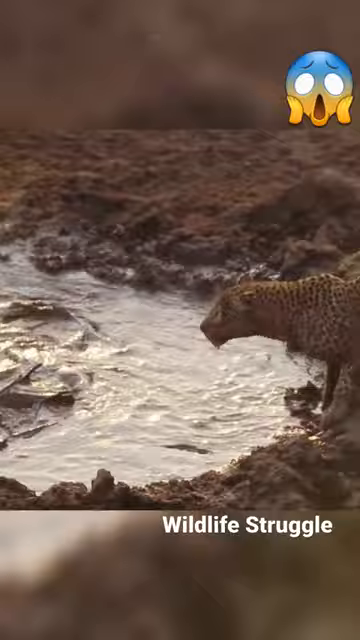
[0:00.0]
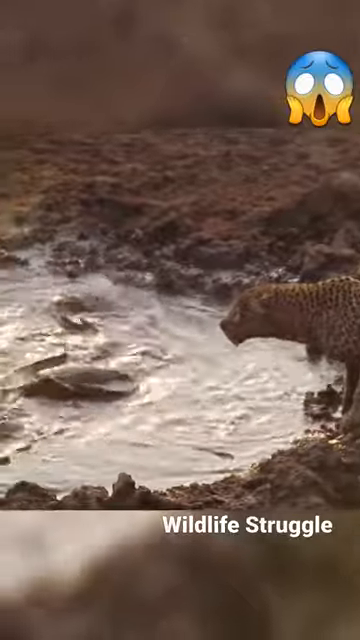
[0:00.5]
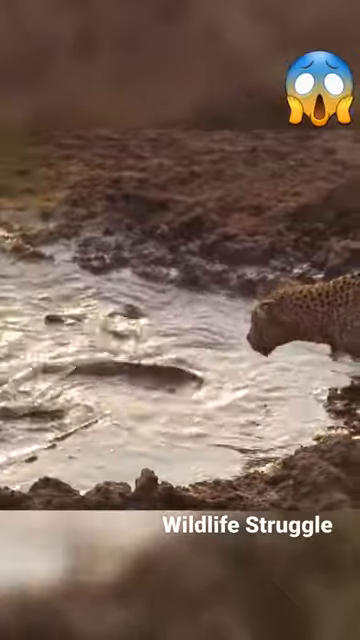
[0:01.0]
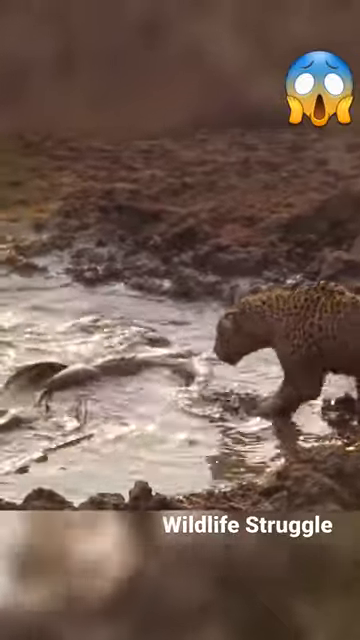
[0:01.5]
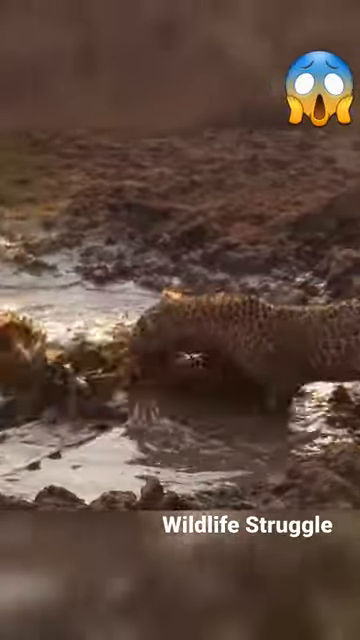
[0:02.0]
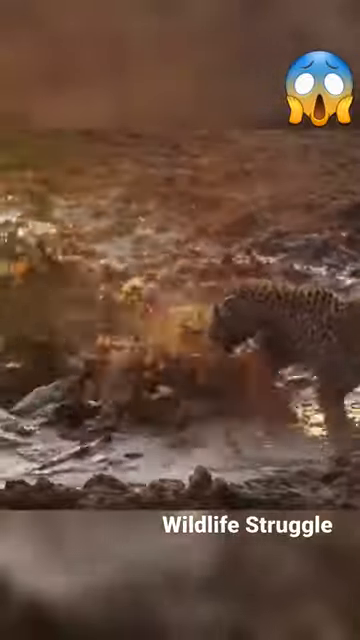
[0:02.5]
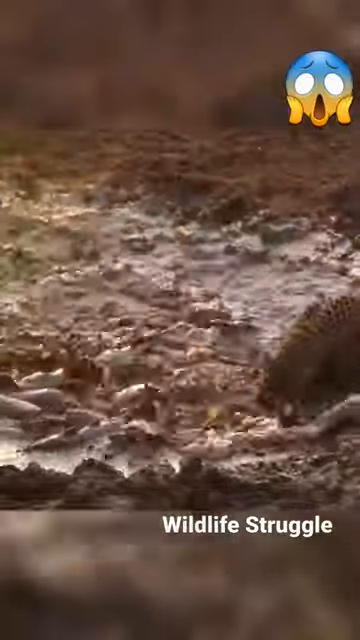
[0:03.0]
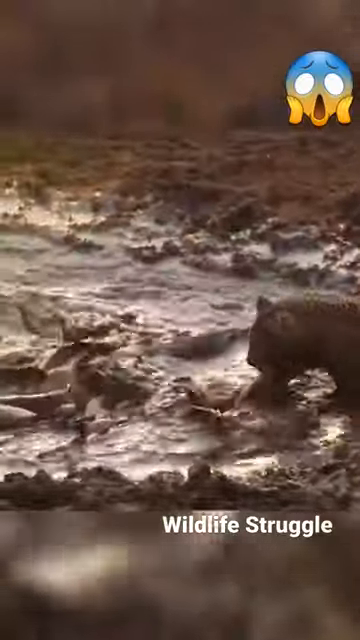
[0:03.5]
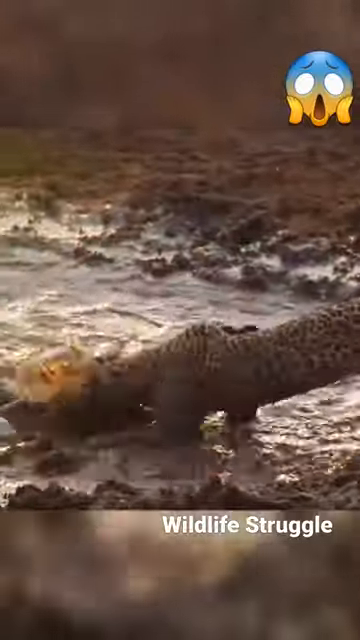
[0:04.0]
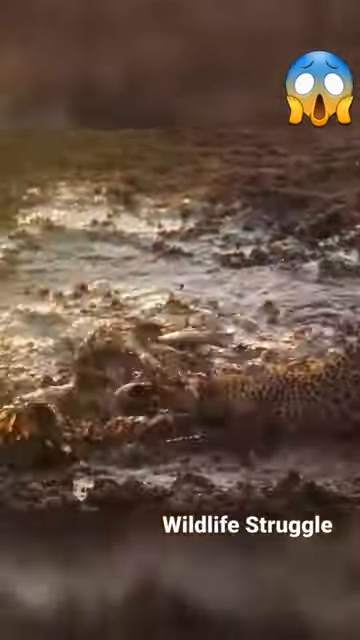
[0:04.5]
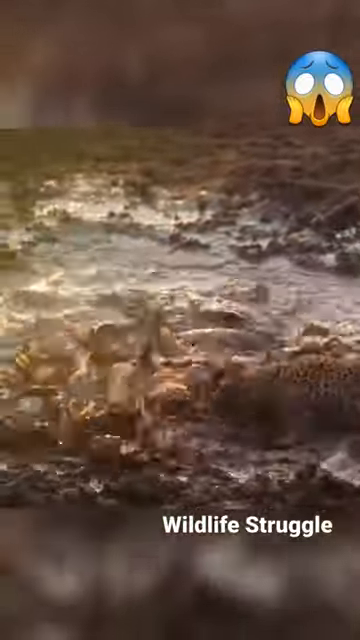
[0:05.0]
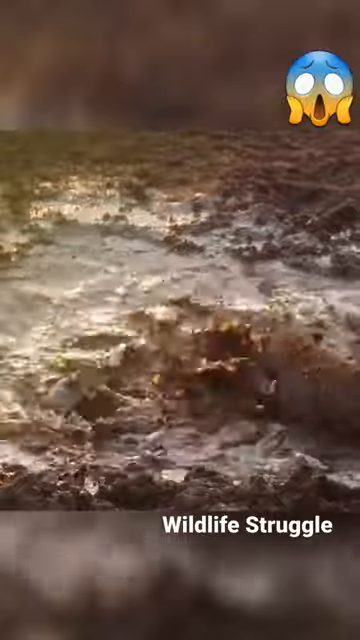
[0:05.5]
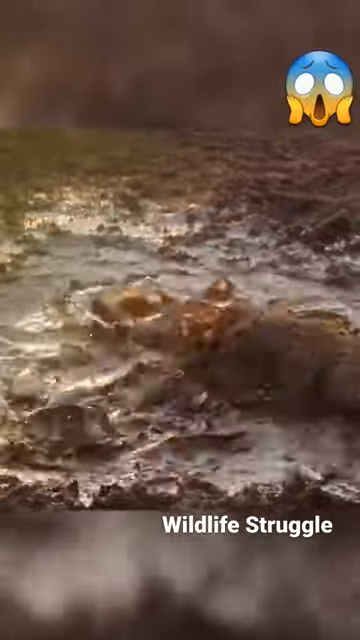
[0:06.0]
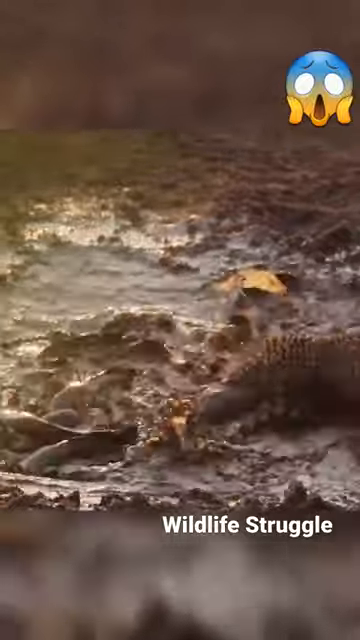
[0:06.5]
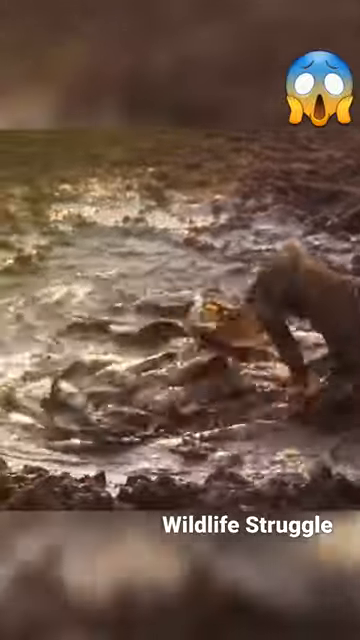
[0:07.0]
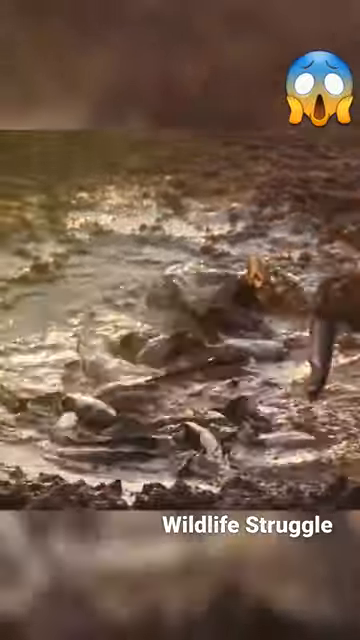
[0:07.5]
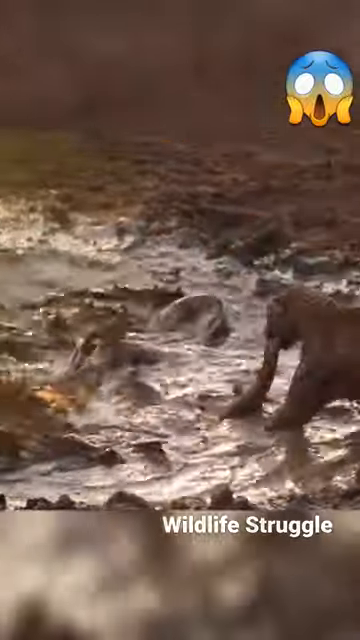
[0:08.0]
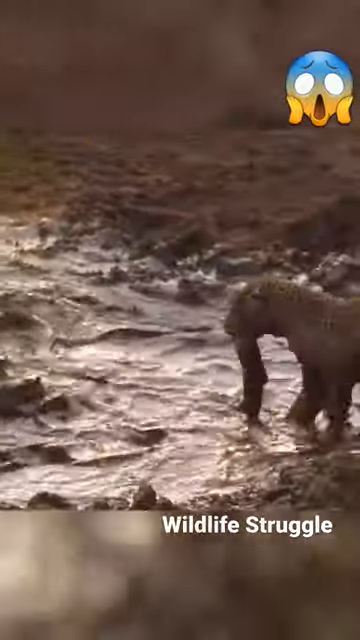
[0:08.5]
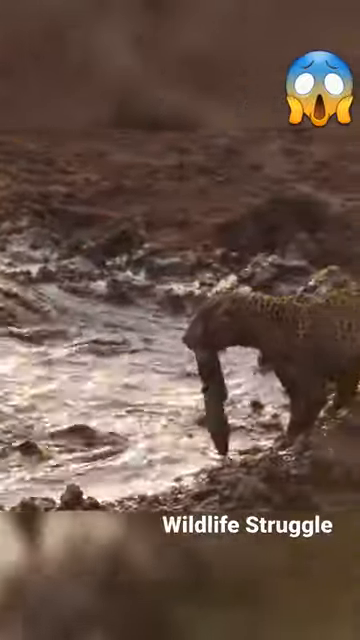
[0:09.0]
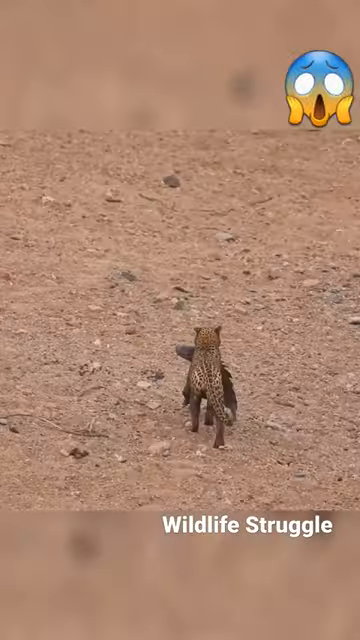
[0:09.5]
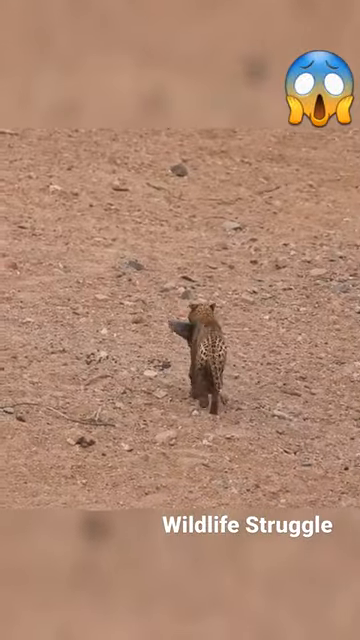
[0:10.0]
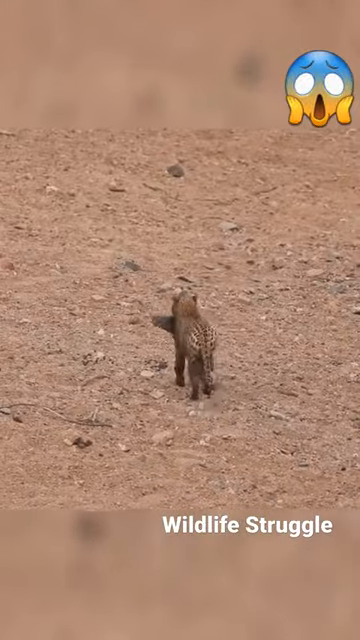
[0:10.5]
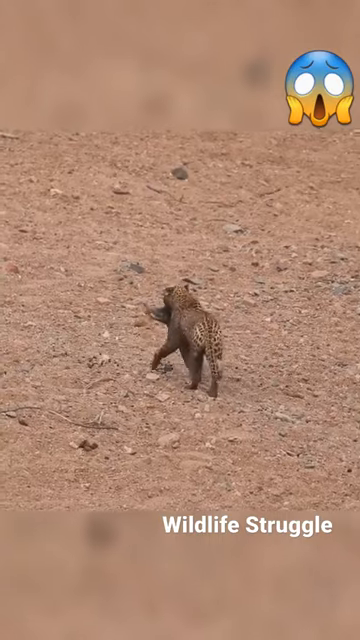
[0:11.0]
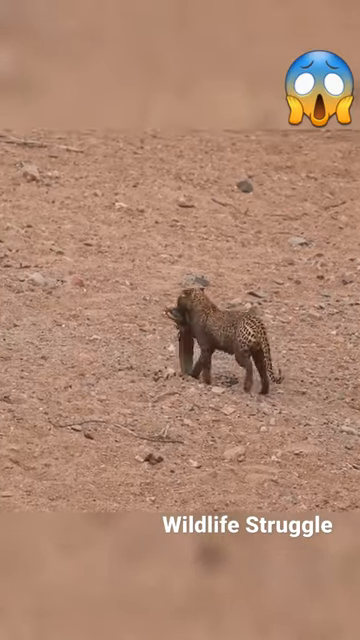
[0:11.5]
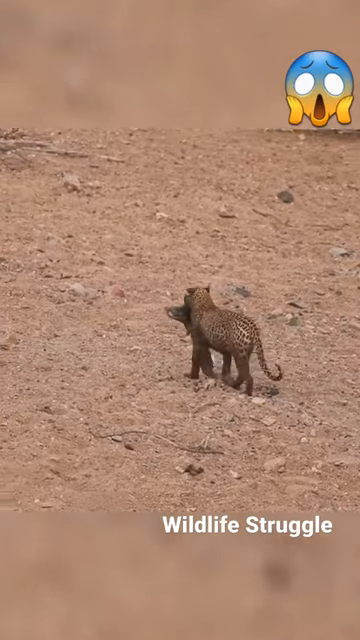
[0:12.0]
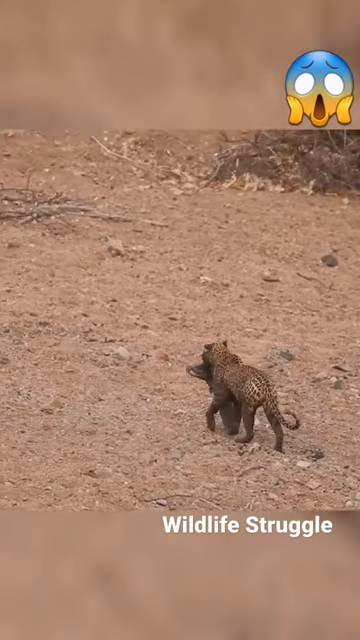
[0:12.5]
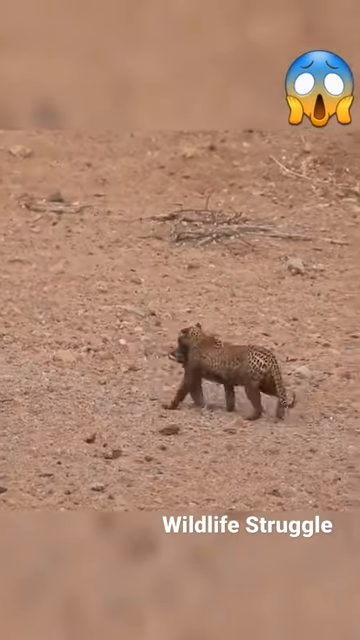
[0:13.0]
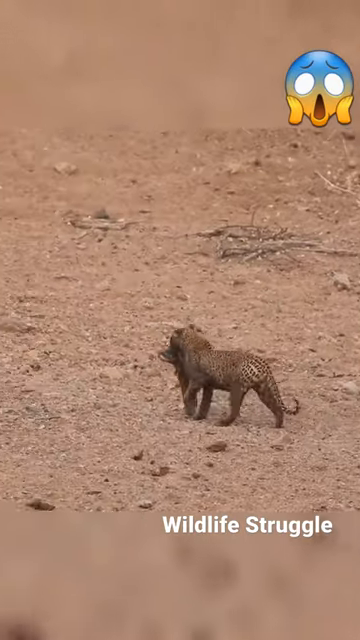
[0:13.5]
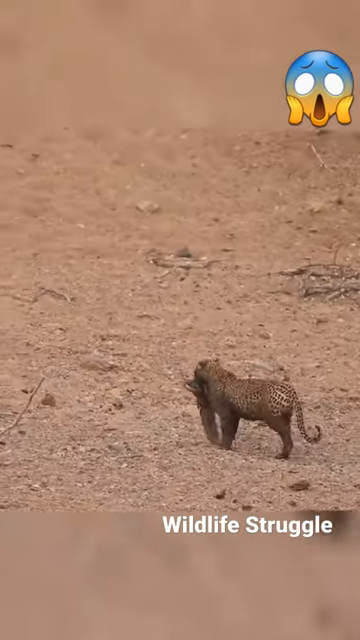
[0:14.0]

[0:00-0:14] In this YouTube Short, titled Fish in Small Puddle Doomed by Hungry Leopard, the text "wildlife struggle" appears in the lower right-hand corner, and a shocked emoji is at the top. A leopard jumps into a dirty puddle of water holding a whole bunch of fish. After a violent struggle, it grabs one of the large fish out of the water, then walks away across a dirt area with the fish in its mouth.